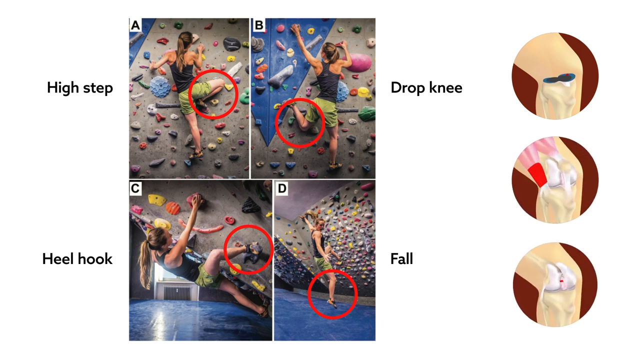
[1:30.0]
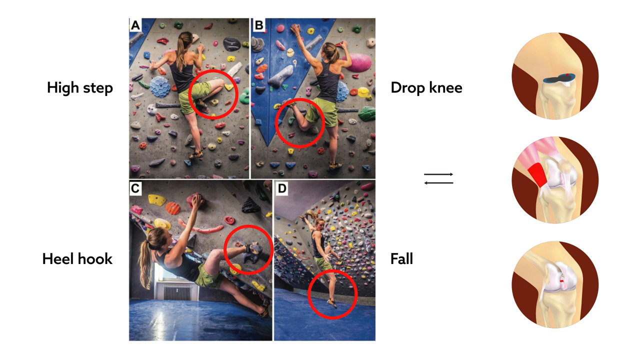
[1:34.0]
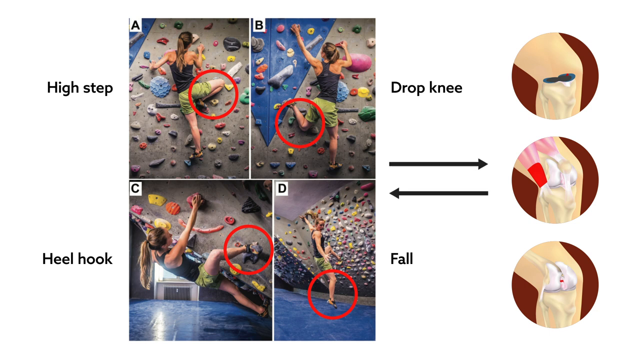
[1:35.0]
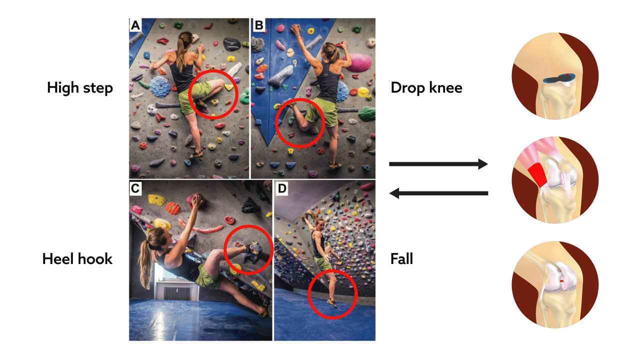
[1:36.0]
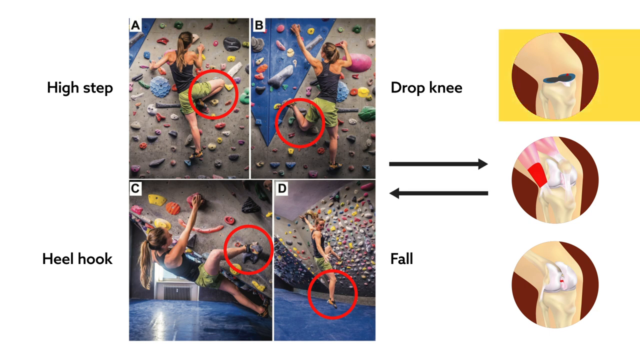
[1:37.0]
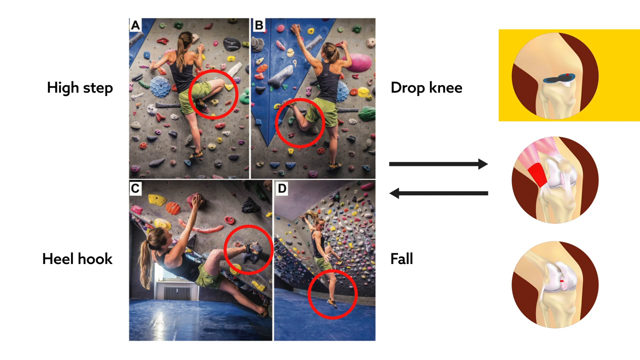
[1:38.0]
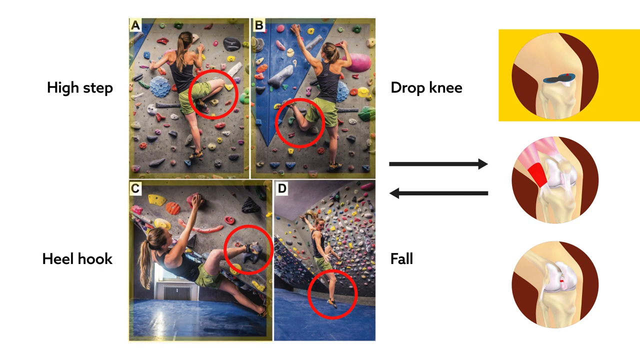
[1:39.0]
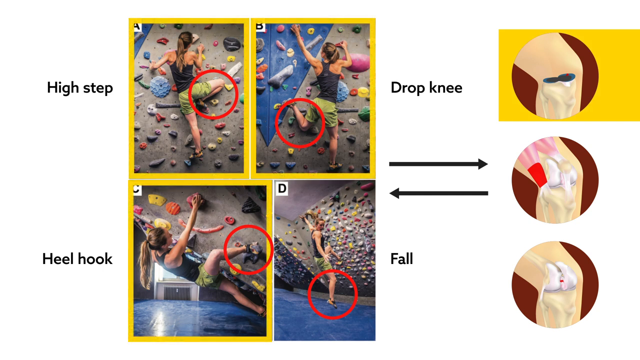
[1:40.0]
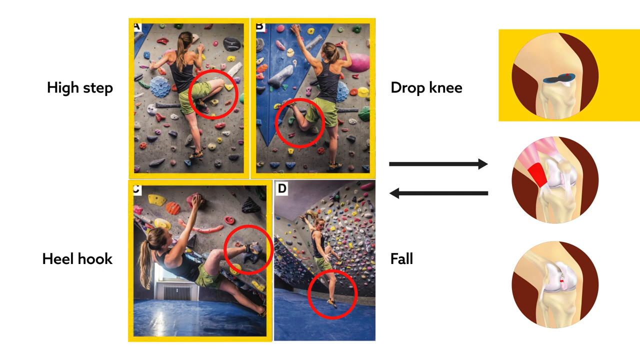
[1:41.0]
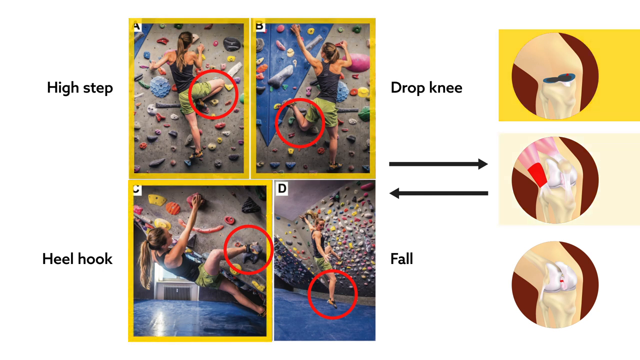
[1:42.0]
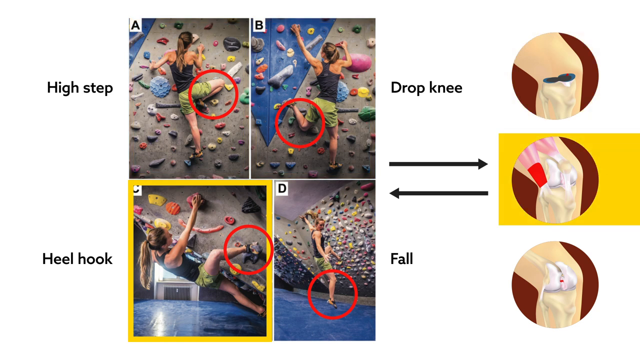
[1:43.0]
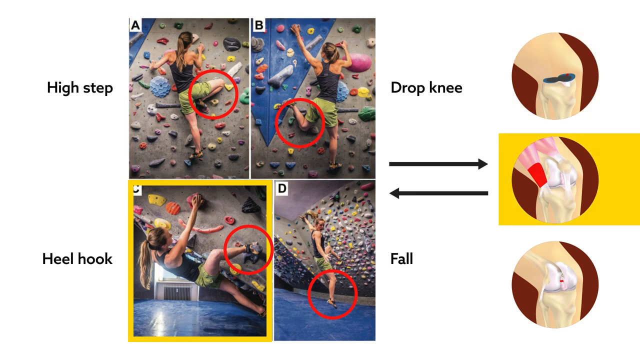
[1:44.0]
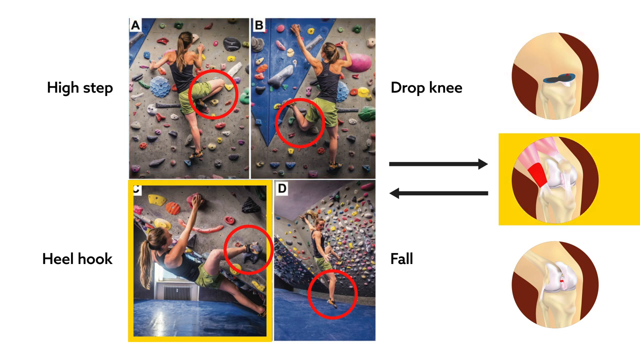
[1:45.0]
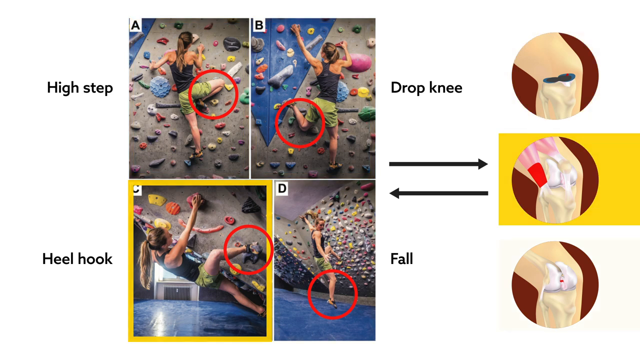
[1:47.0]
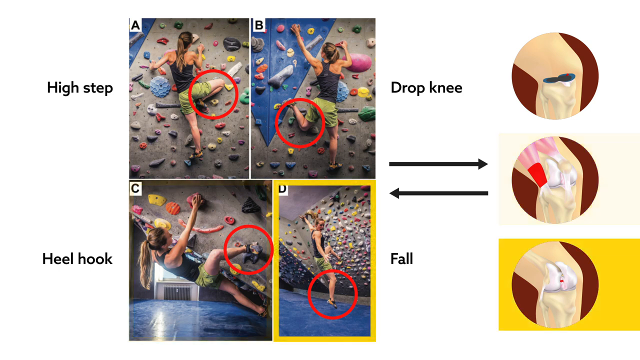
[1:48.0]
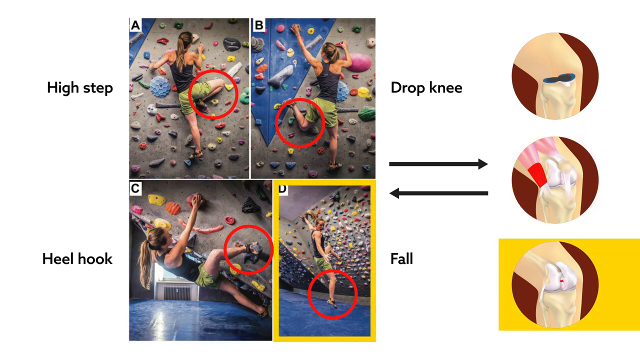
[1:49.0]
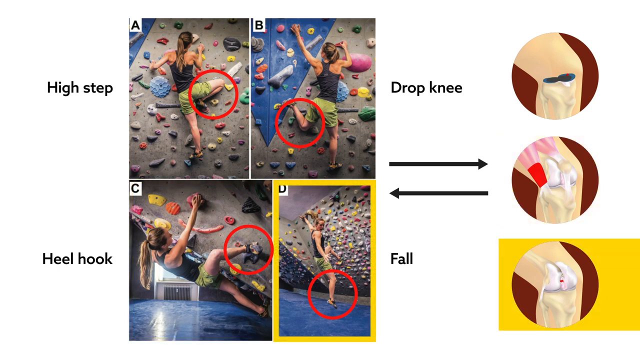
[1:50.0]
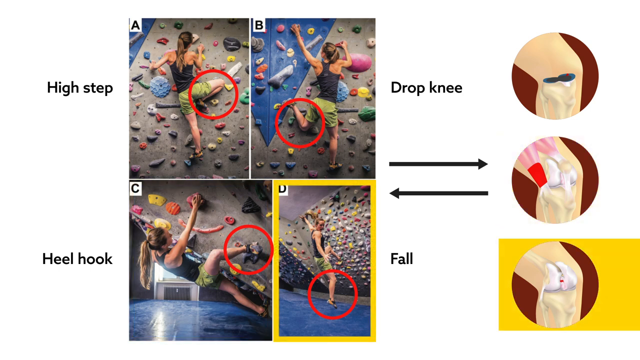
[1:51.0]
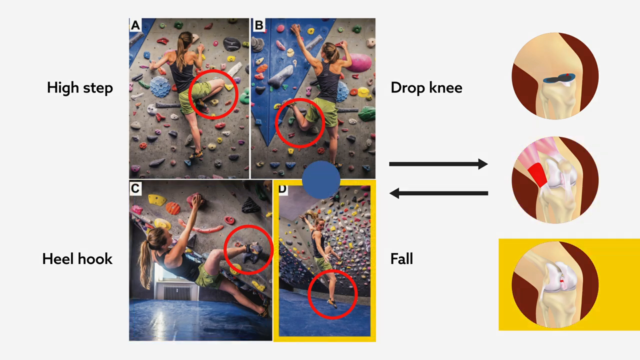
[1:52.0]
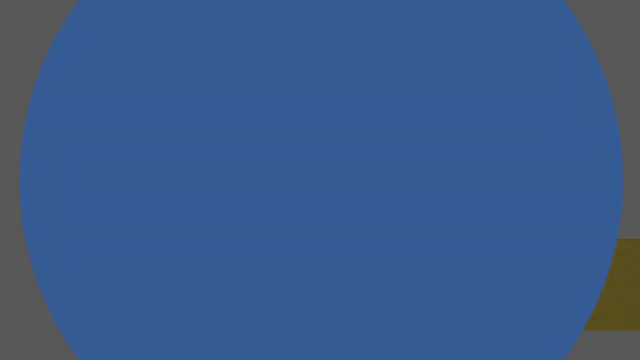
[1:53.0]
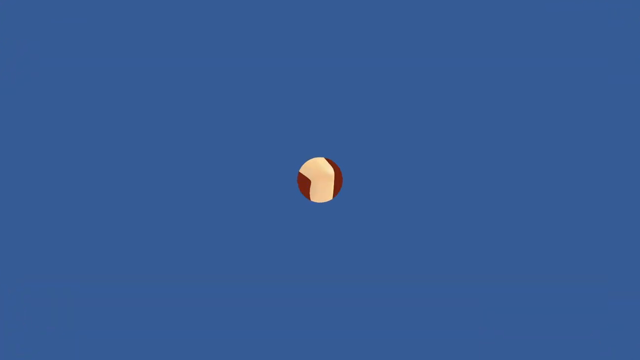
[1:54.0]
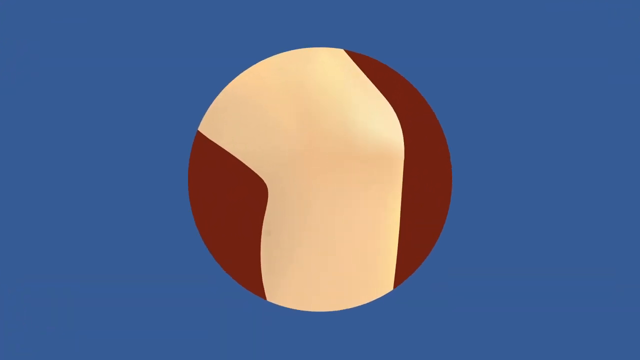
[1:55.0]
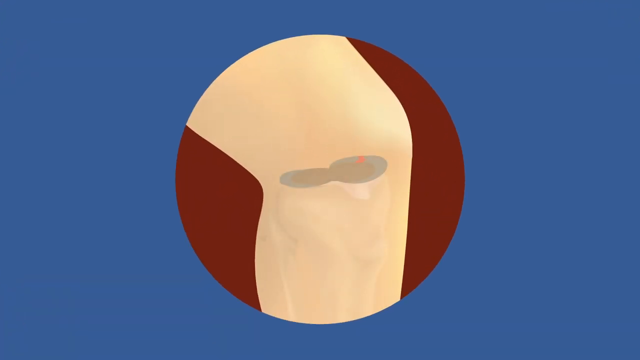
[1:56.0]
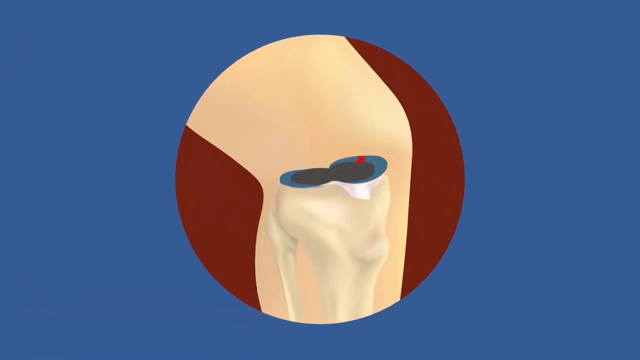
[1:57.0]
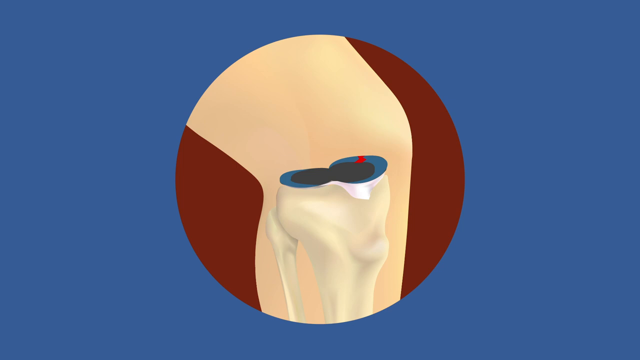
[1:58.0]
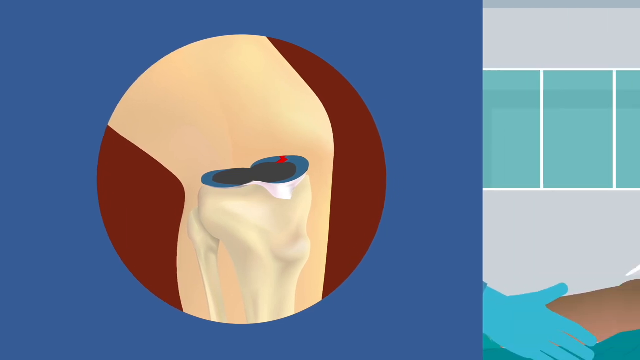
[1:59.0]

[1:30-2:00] Four pictures labeled A, B, C and D show a woman in a shoulderless black top that looks like a sports shirt, with her shoulders visible, and green shorts. To the right of image A is the text "high step", and the woman's right leg is circled in red in image A. To the left of image C is the text "hill cook", and the person's right foot is circled in image C. To the right of image B is "drop knee", and the person's knee is circled in image B. To the right of image D is "fall", and the person's feet are circled in image D. The left side of the screen shows illustrations of a knee: the top one shows the bones, the middle one shows the bones and tendons, and the bottom one shows the bones but no tendons. Two lines appear, one going from the pictures to the middle knee image and one going from the middle knee image to the pictures. The middle image is outlined by a yellow rectangle, which then moves to the bottom image. A blue circle appears in the center of the screen and then covers the entire screen. A red circle appears showing a person's knee, with the bottom of the knee visible.